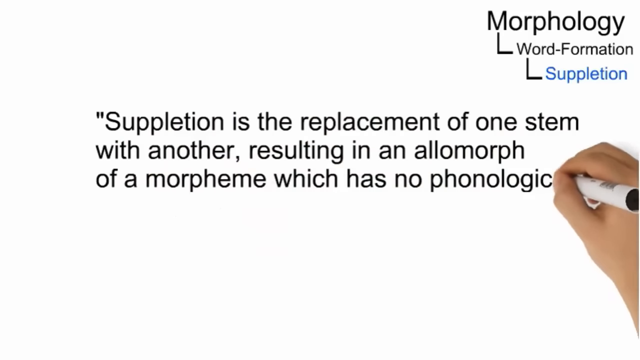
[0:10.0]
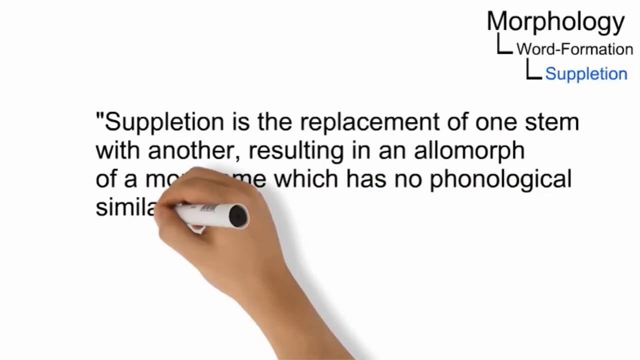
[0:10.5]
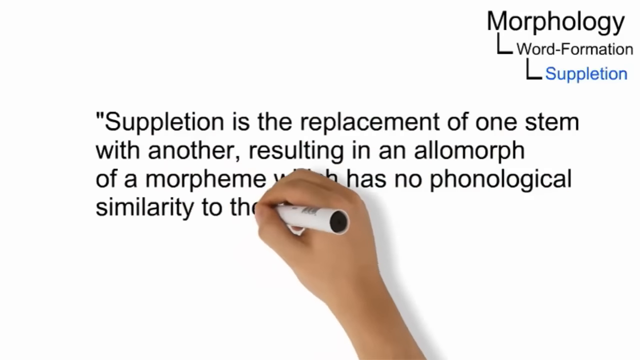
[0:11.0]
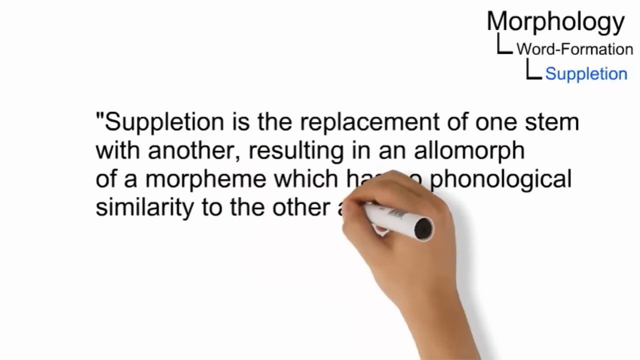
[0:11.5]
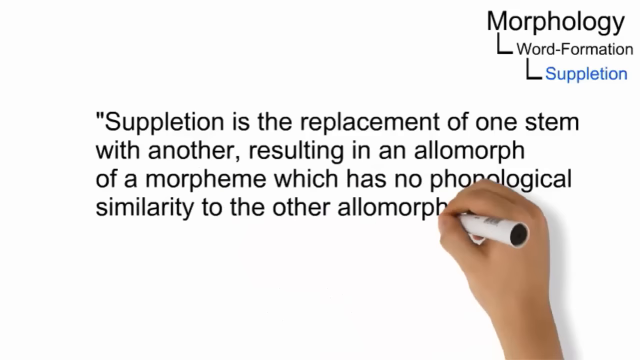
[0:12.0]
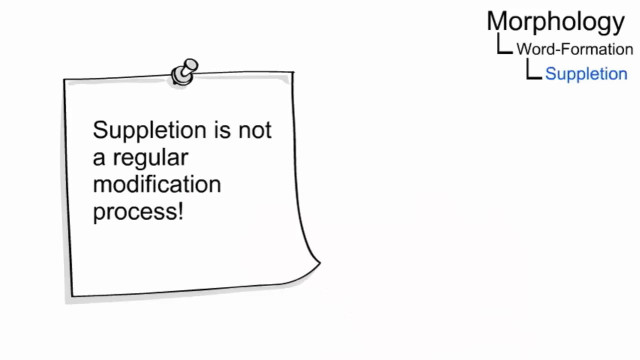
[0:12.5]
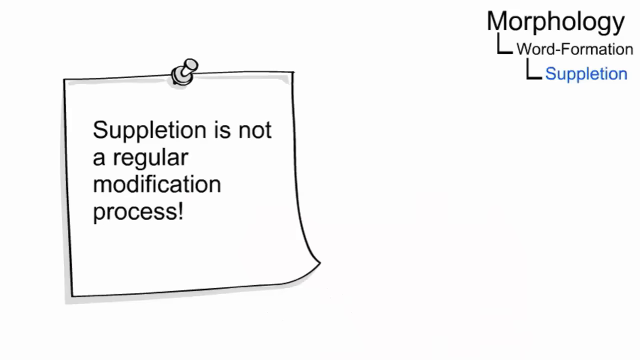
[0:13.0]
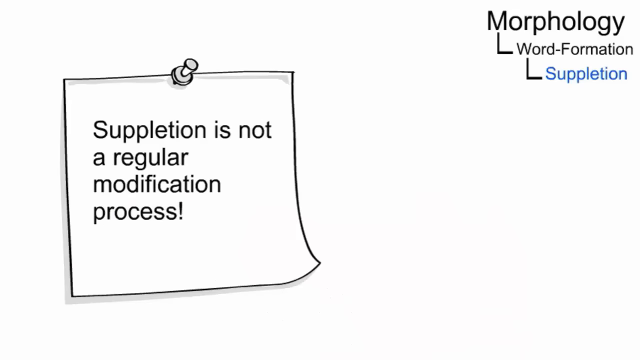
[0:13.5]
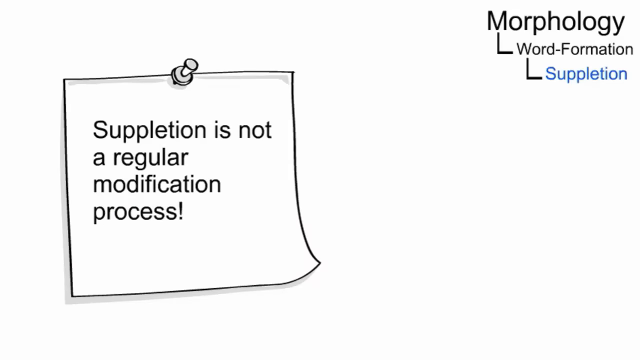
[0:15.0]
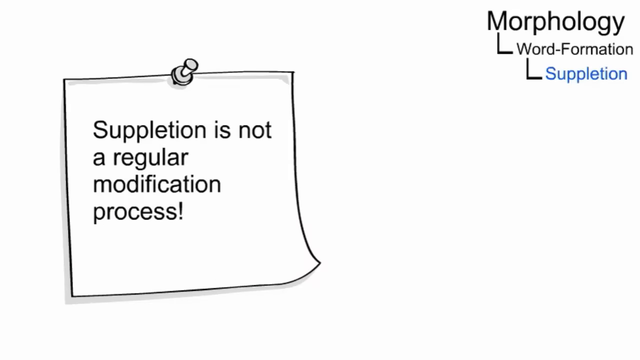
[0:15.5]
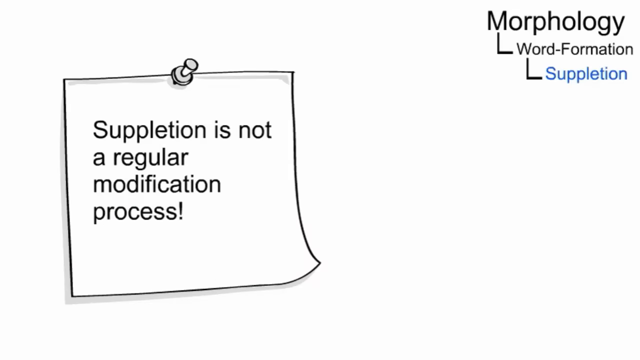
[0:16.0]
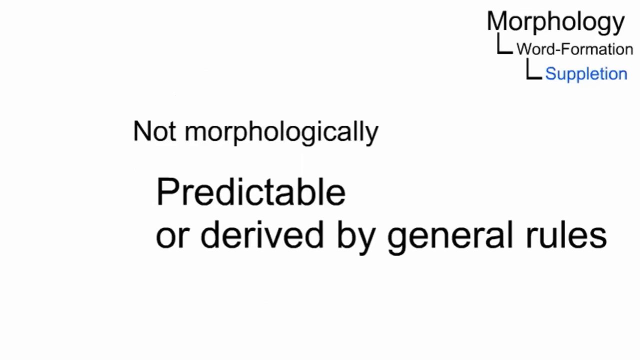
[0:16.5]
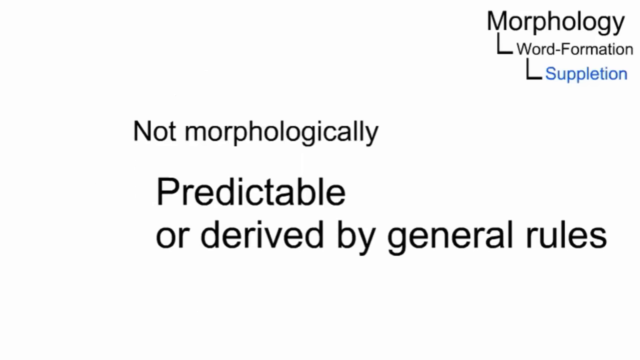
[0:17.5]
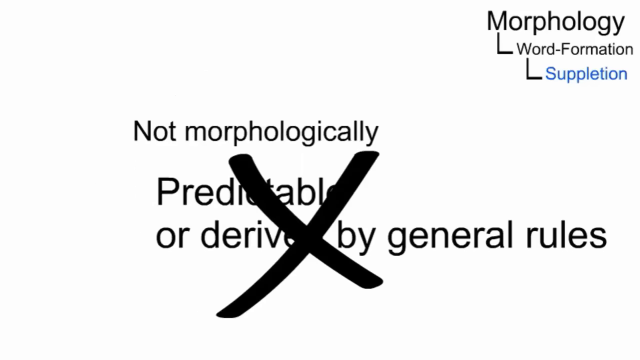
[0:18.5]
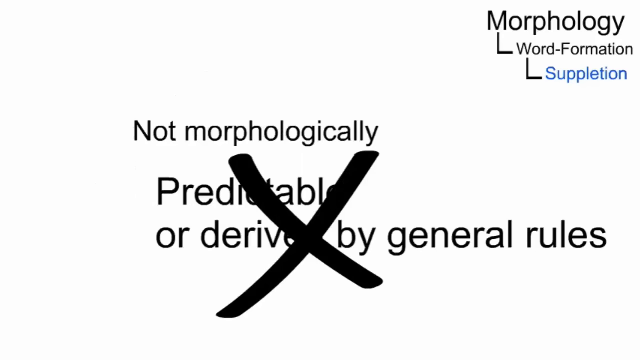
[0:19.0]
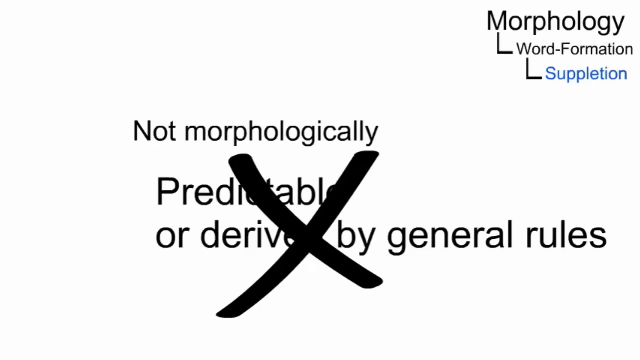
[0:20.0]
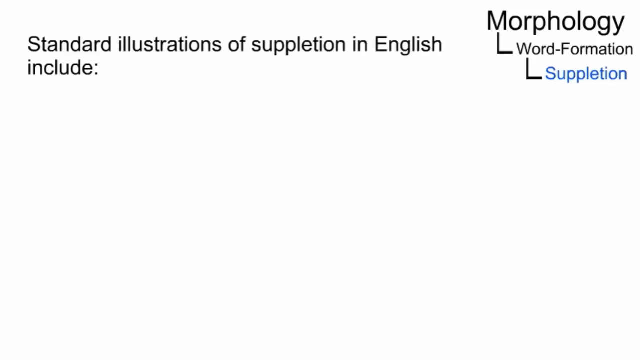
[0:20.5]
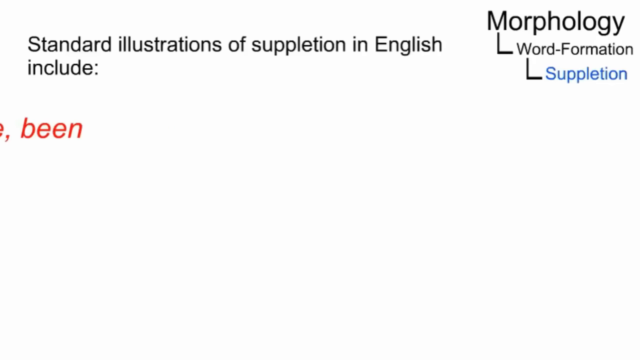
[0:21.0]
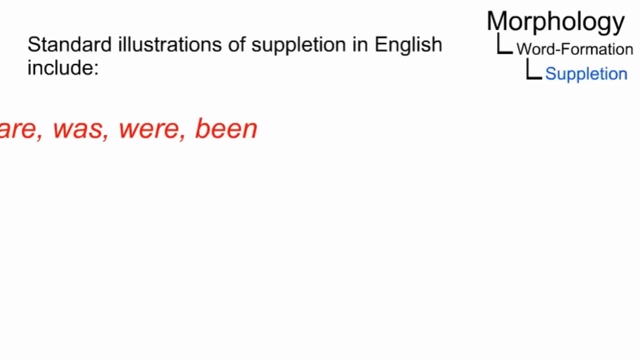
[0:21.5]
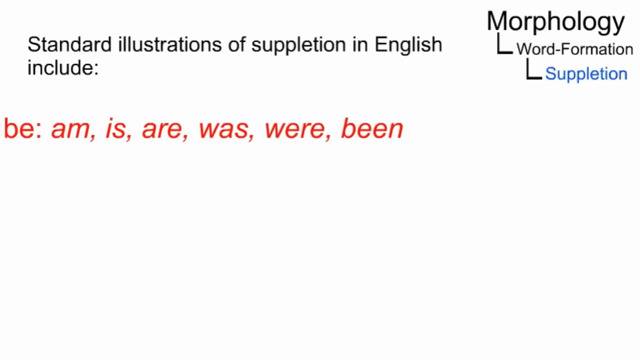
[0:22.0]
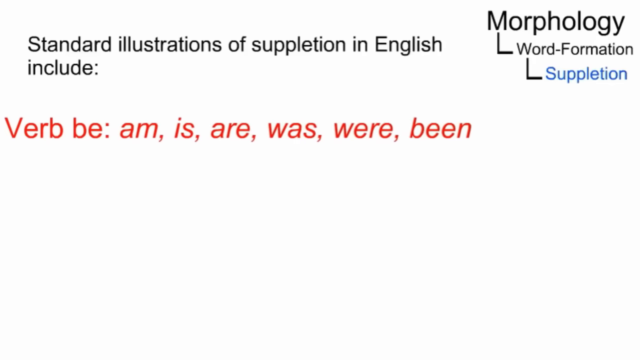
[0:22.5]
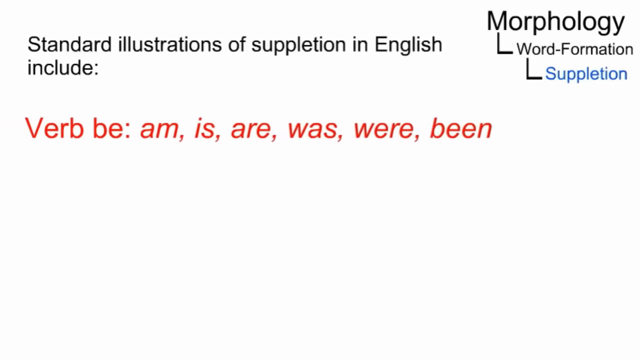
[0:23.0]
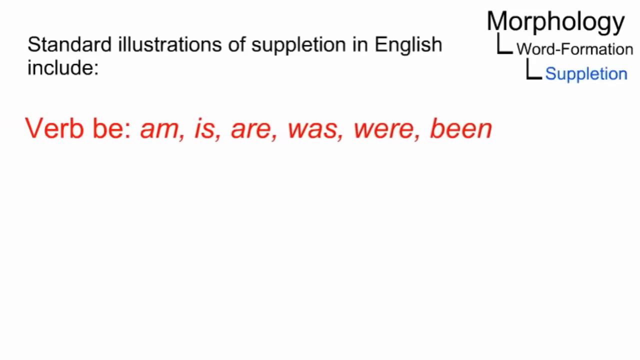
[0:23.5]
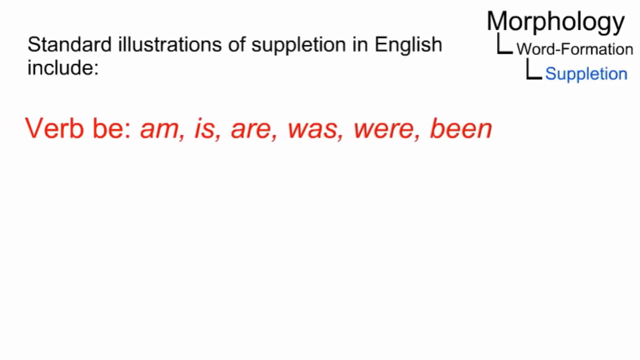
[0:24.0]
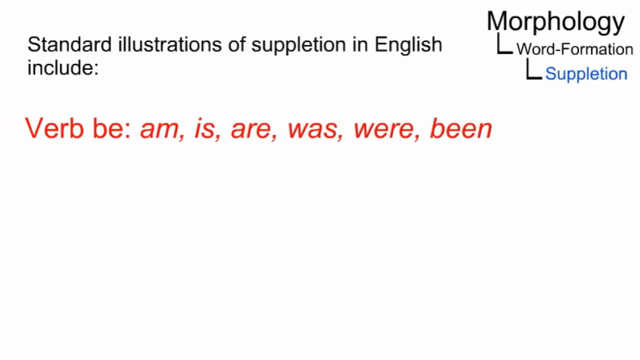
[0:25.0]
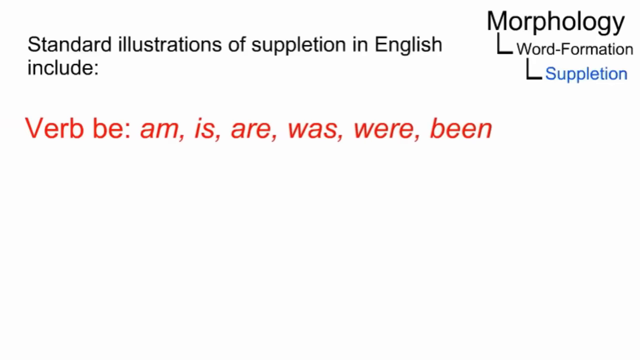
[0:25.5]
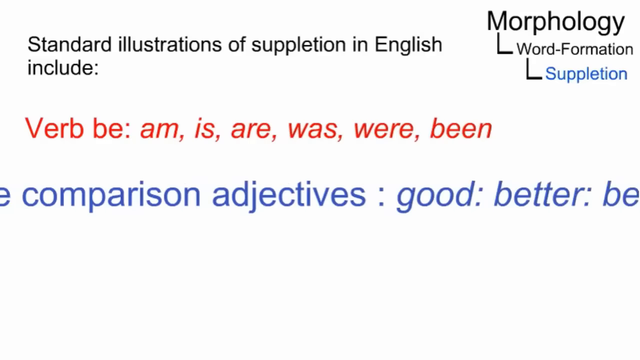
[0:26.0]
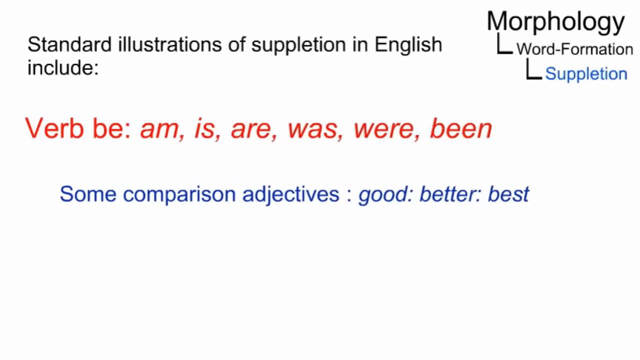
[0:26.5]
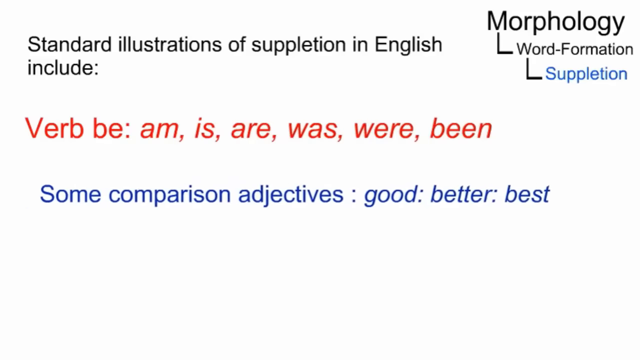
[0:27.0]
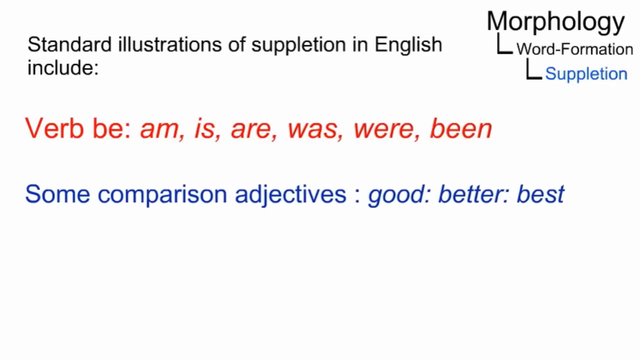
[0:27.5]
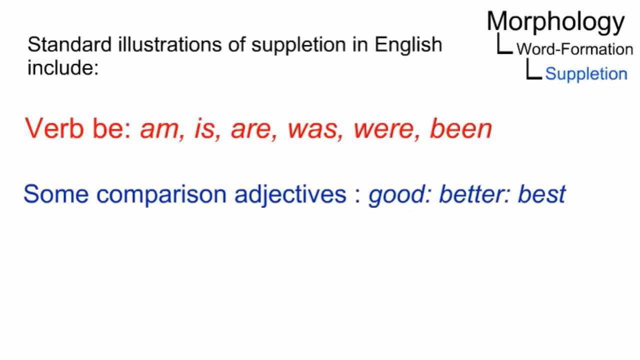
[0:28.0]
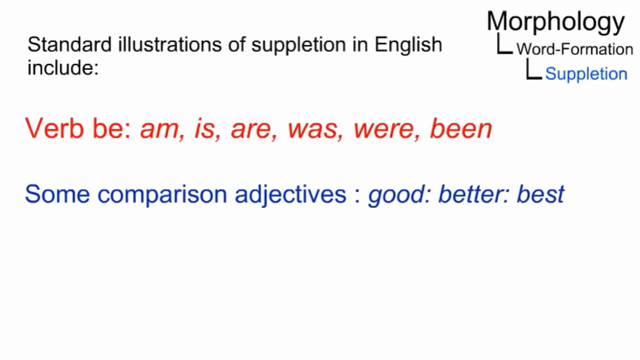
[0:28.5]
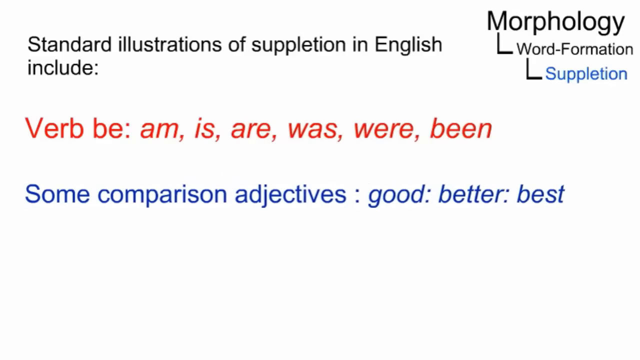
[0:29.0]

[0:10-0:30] Words are written on the white board. The verbs "be, am, is, were, were, been" are listed, along with the comparison adjectives "good, better, best." Also written is "suppletion is the replacement of one stem with another." Inside a white box is a note reading "Suppletion is not a regular modification process." Written text along the video reads "morphology L word formation L suppletion." A hand keeps writing with a white pen. At the top of the video is written "standard illustrations of suppletion in English."